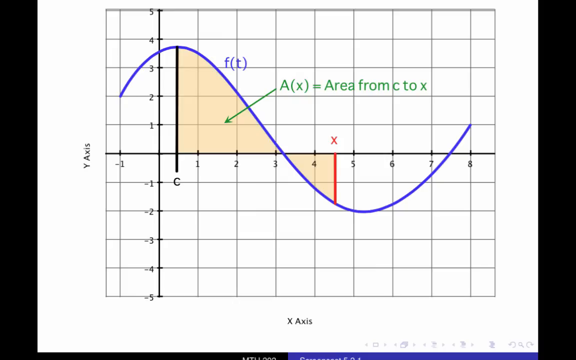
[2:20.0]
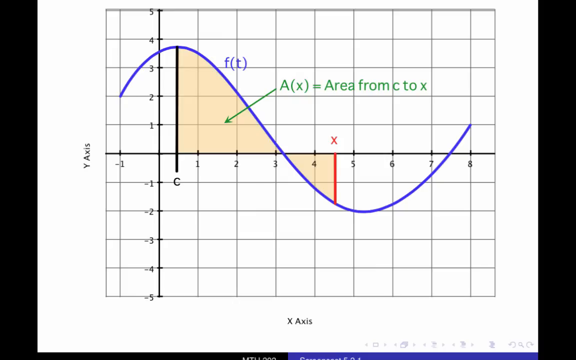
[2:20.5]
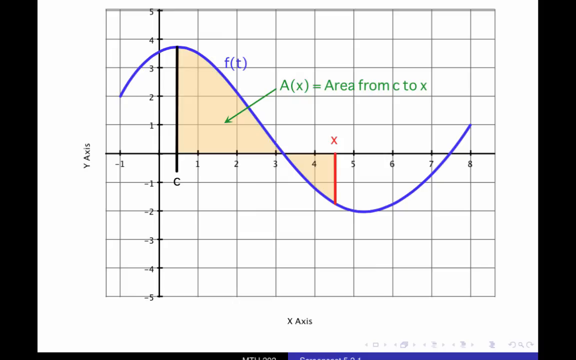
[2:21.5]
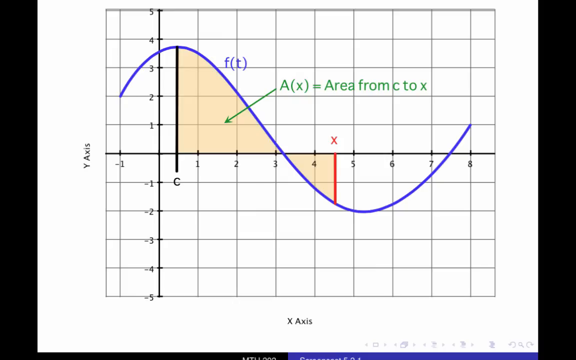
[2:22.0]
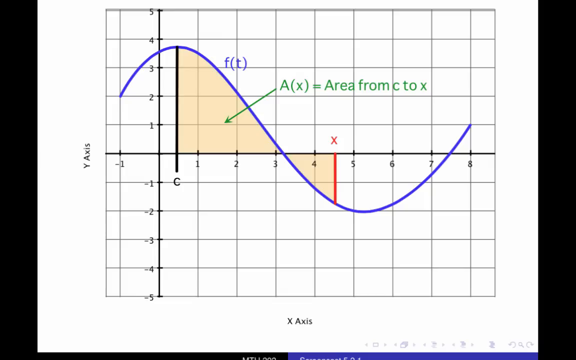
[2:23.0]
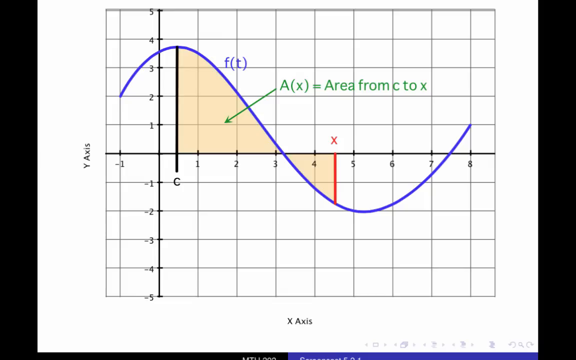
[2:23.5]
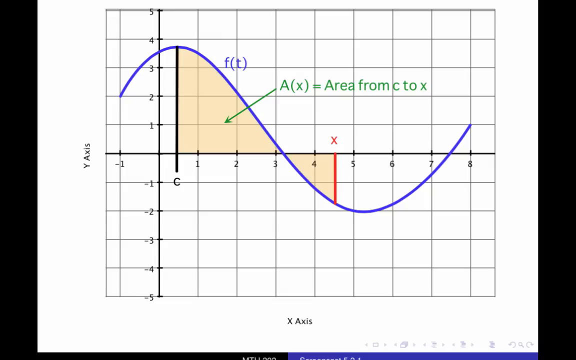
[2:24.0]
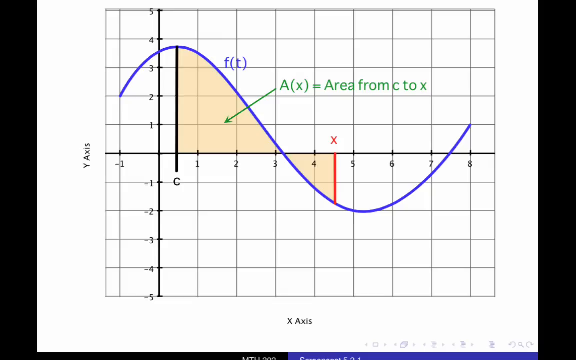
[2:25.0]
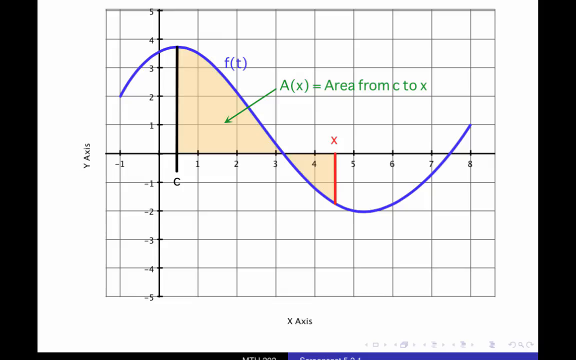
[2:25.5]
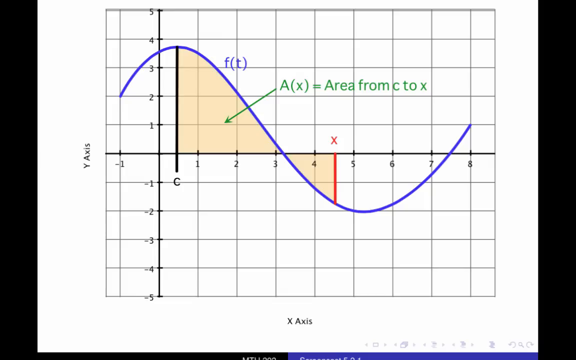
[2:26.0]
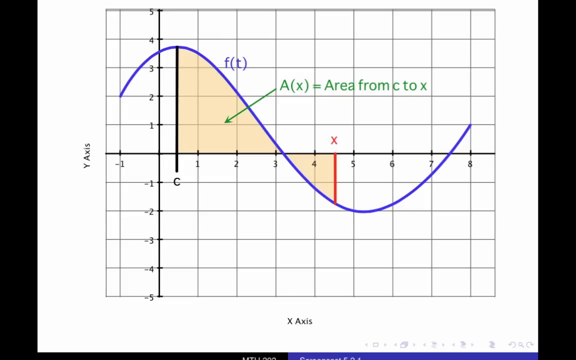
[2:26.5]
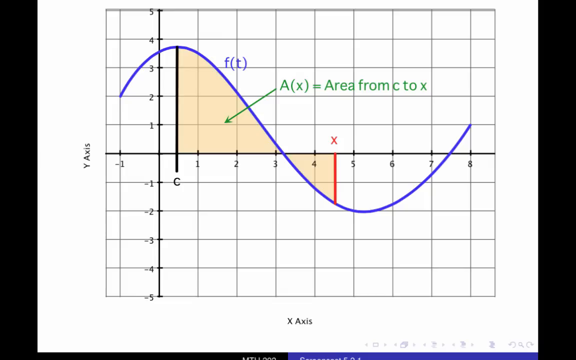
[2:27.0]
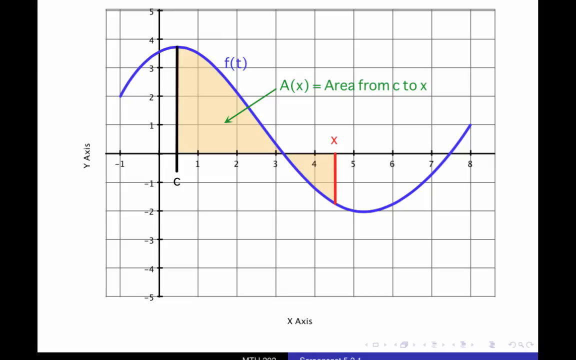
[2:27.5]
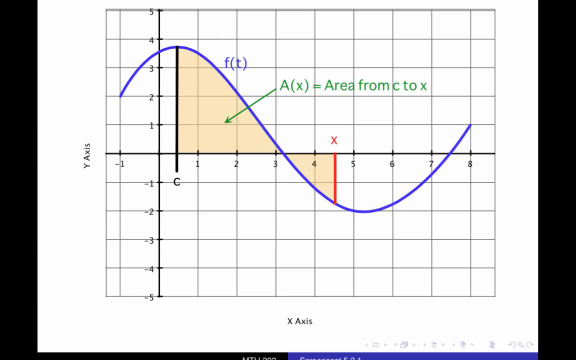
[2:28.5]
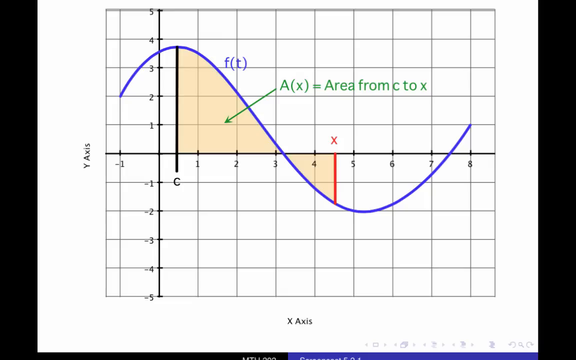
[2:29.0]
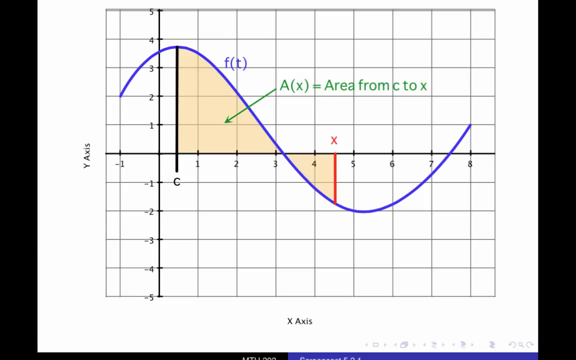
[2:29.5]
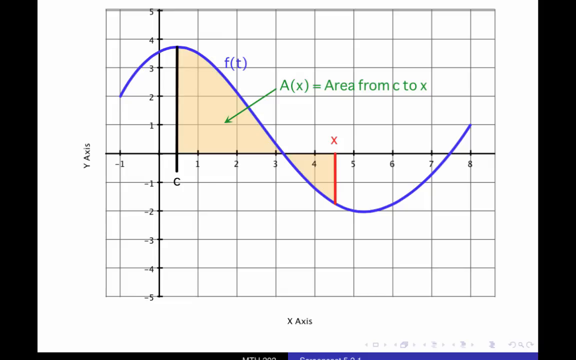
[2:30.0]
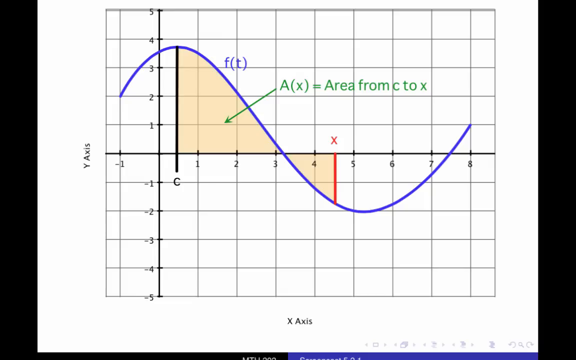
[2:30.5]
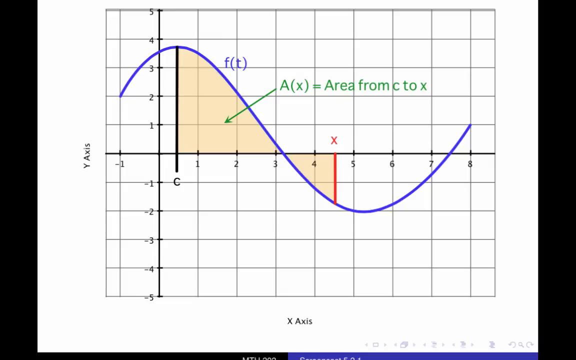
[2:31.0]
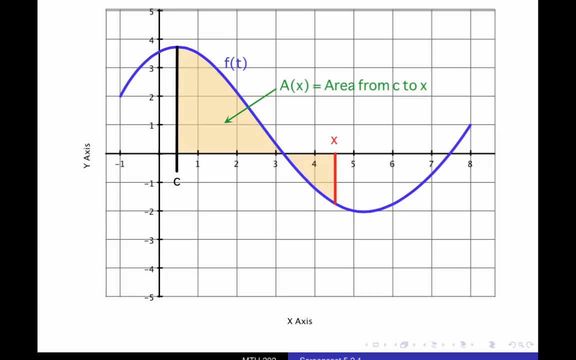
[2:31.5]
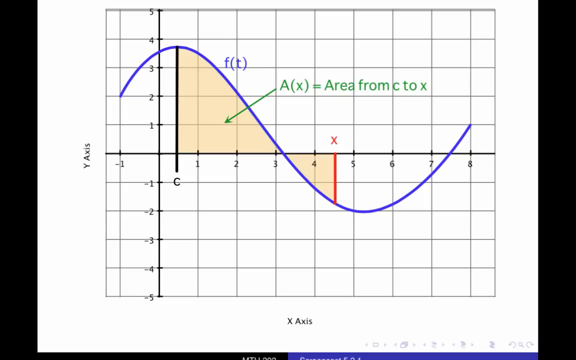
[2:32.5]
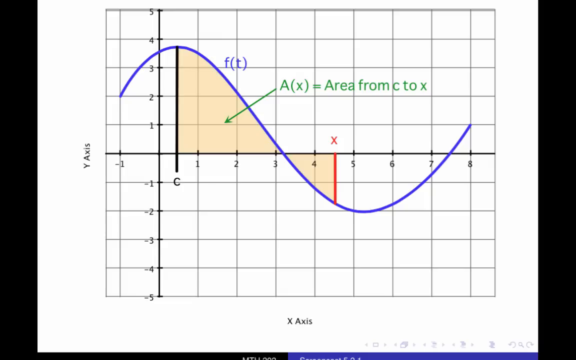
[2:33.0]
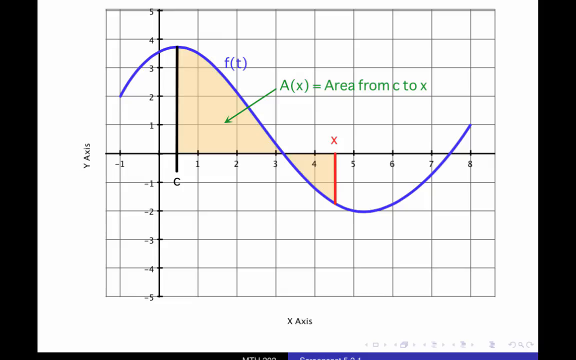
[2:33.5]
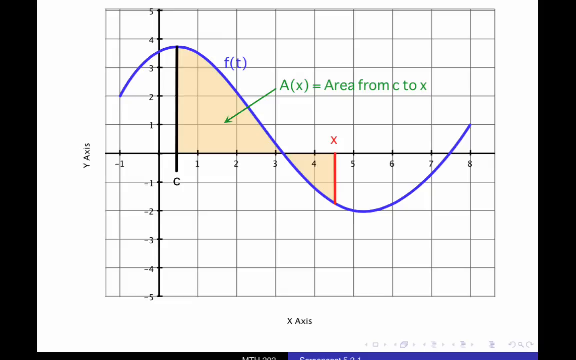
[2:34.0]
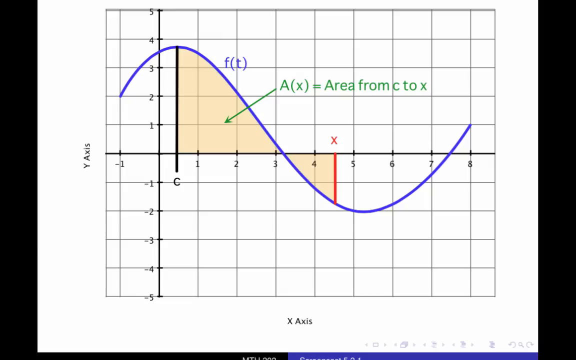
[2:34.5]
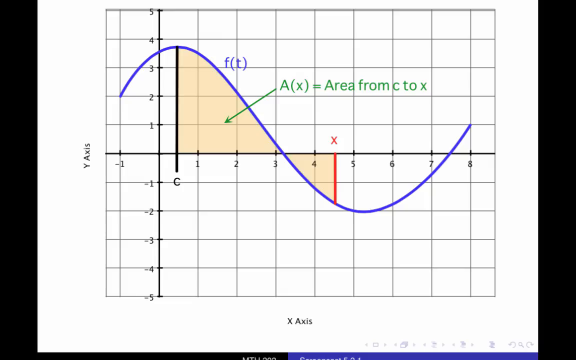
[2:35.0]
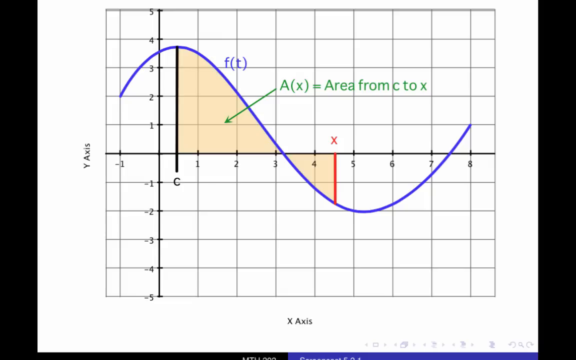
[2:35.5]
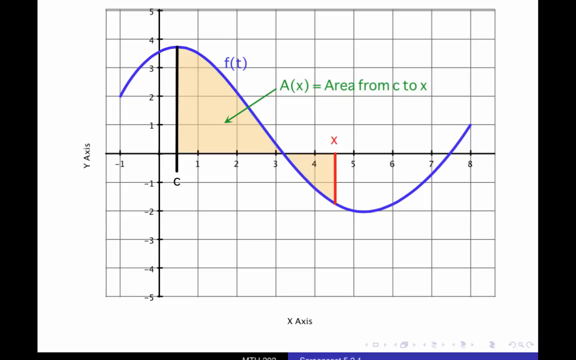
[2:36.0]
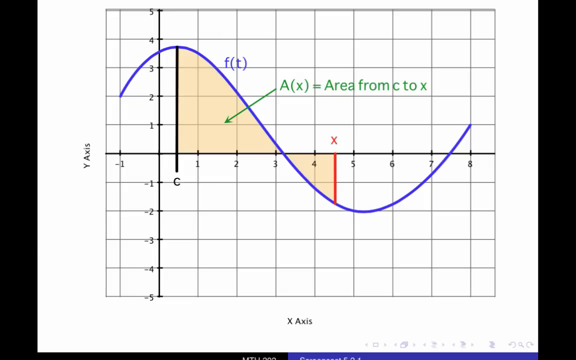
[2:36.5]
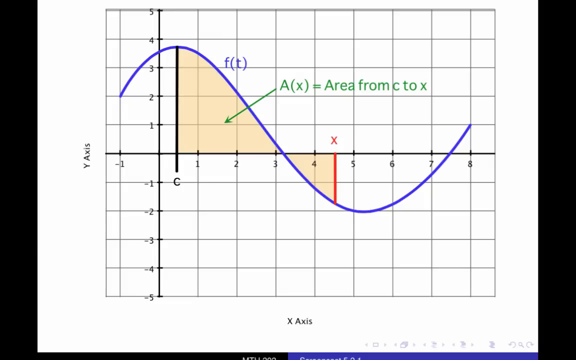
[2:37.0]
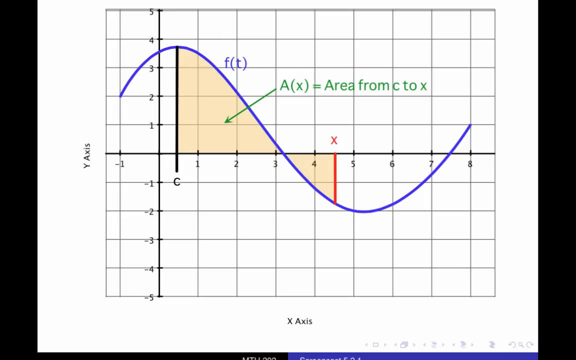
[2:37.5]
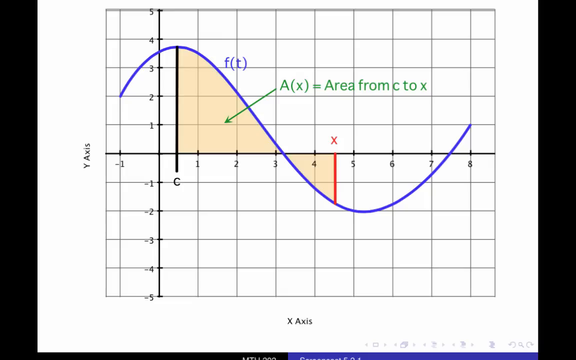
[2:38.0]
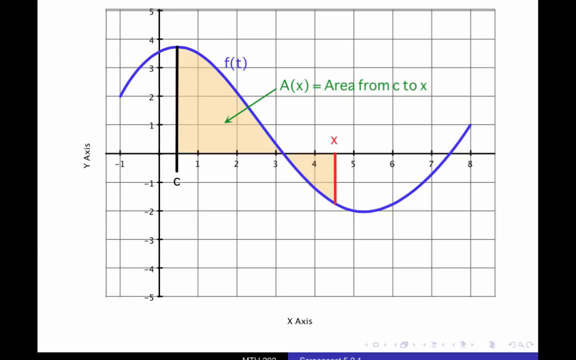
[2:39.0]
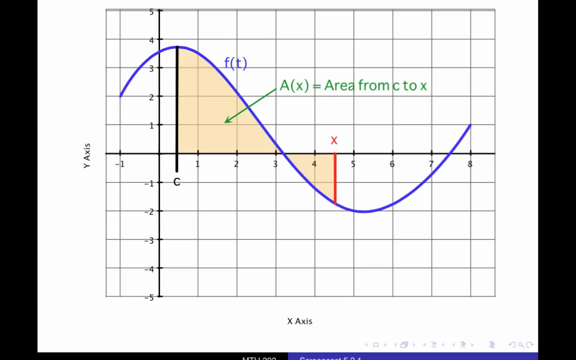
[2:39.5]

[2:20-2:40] What appears to be a graph tracks three elements: F(T); A(X), the area from C to X, pointing to the beige-shaded space between the lines; C, marked with a black line; and X, marked with a red line. The x-axis runs from -1 to 8 and the y-axis from -5 to 5. F is drawn as a blue line beginning at (-1, 2) and ending at (8, 1). The highest point of F, which is also C, is labeled (0.5, 3.8), and the lowest point is labeled (-2, 5). "Area from C to X" is written in green, with an arrow pointing to the beige-shaded area between C and X.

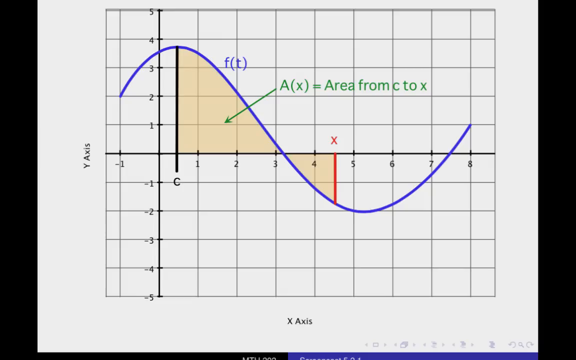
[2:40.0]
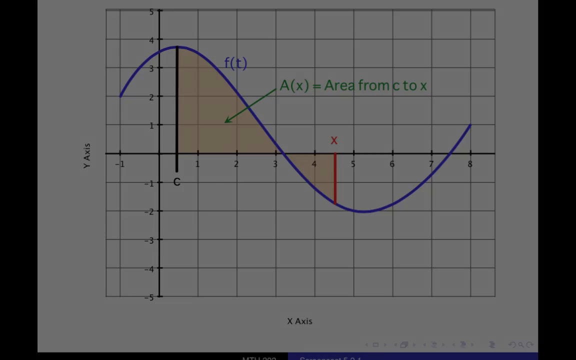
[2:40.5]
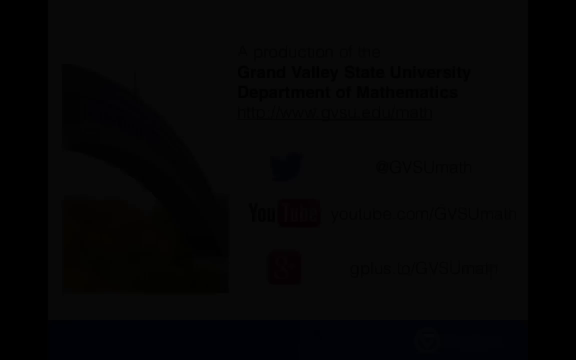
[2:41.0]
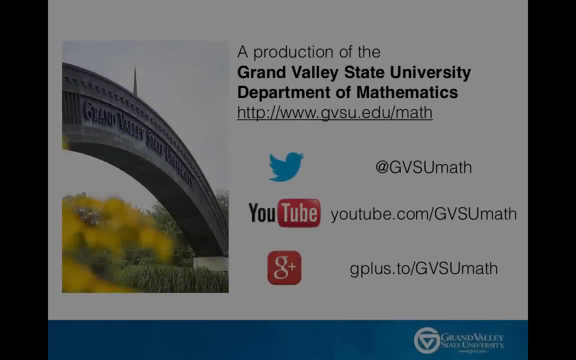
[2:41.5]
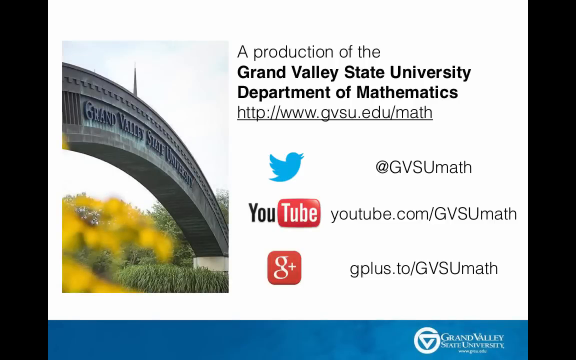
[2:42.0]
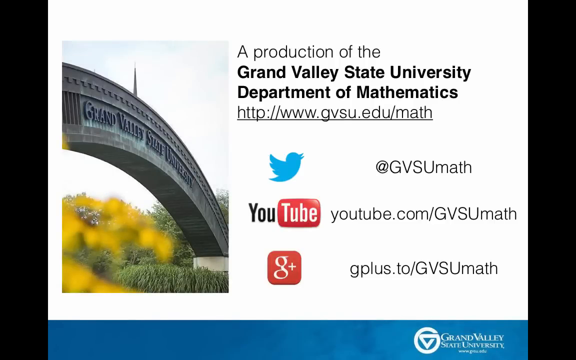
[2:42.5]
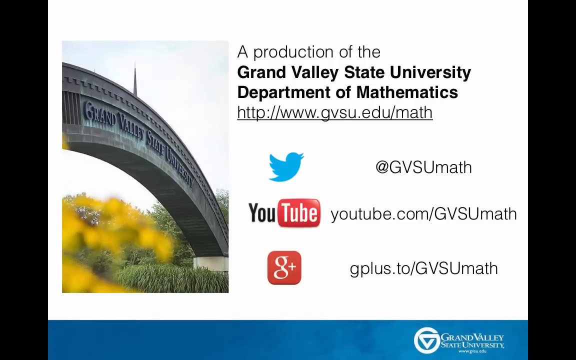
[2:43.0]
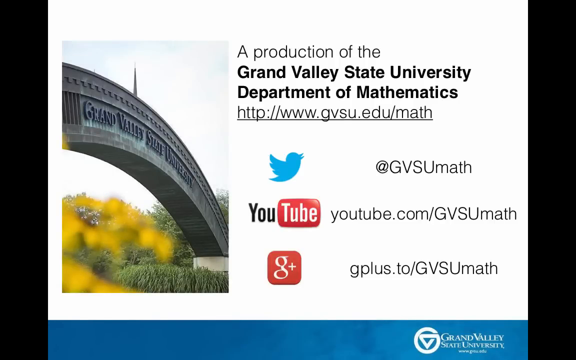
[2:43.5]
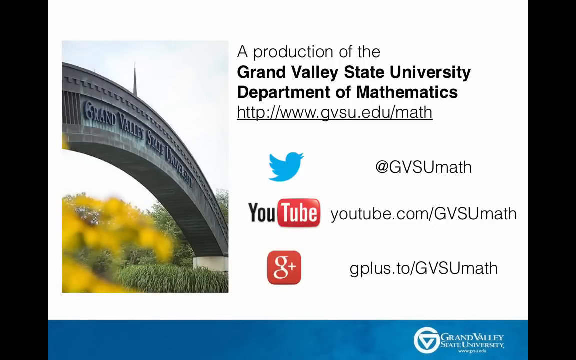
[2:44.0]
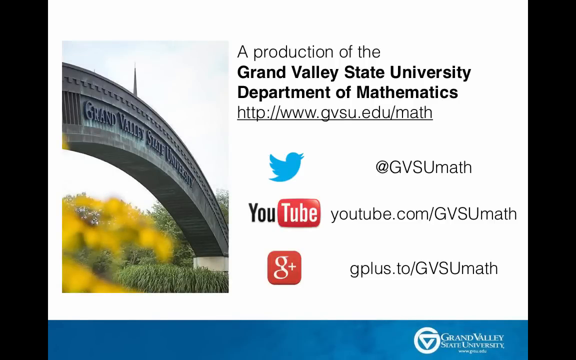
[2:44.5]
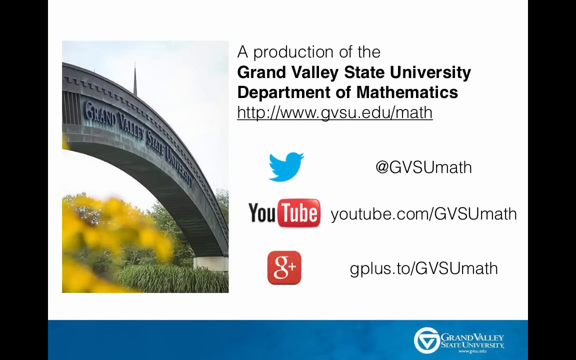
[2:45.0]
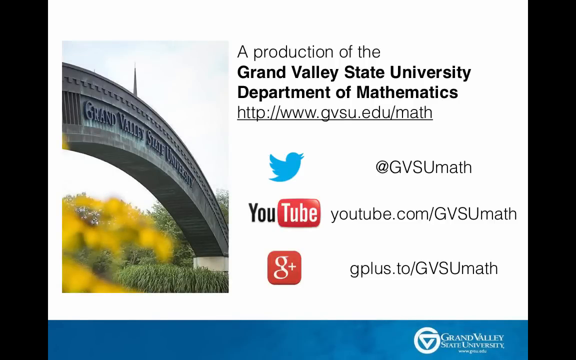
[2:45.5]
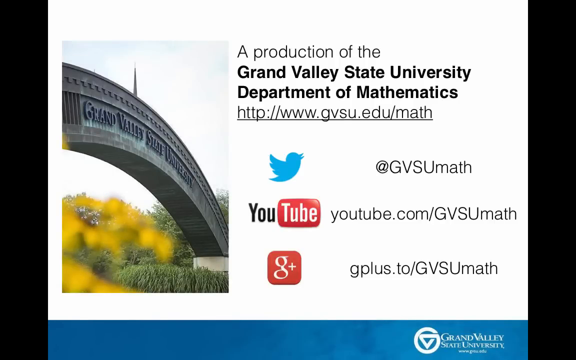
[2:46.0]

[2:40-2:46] The graph tracking F(T), A(X) (the area from C to X), C and X is on screen. The curved line of F, the starting point at C and the end point at X enclose the area from C to X, which is shaded in beige. The screen darkens and relights to a new slide that says "a production of the Grand Valley State University Department of Mathematics", with a link to their website, a link to their Twitter page, a link to their YouTube page, and a link to their Google Plus page. On the left of the slide is a picture of Grand Valley State University on a giant arch; it shows what appears to be an unfocused cluster of yellow flowers.